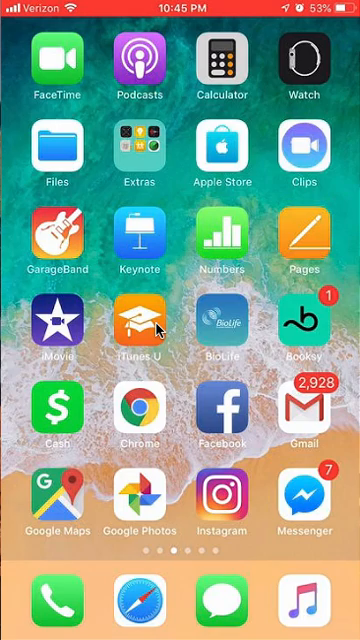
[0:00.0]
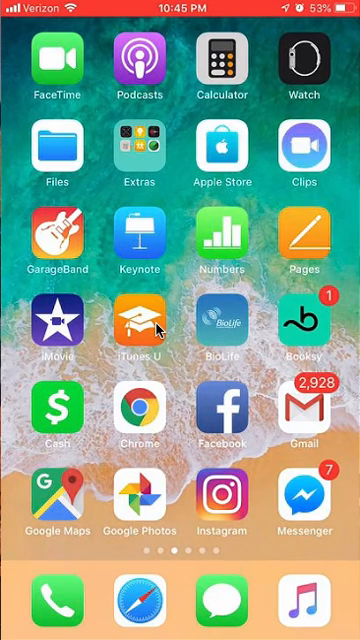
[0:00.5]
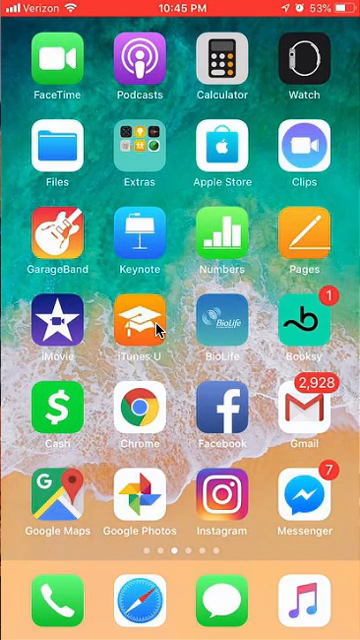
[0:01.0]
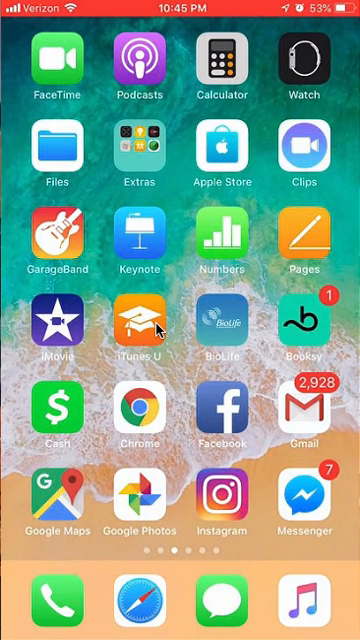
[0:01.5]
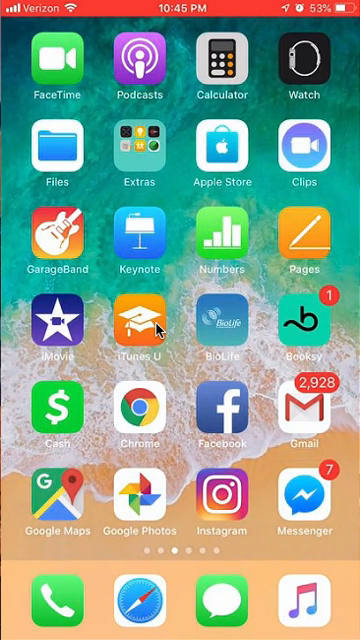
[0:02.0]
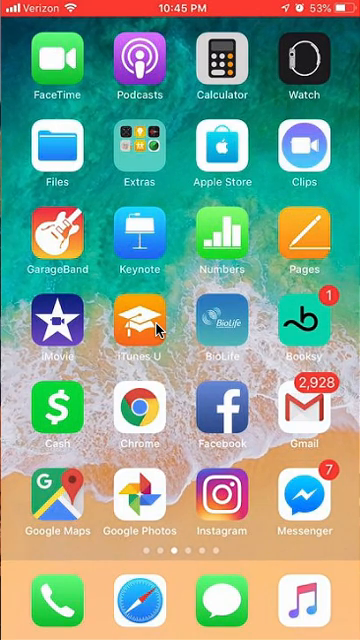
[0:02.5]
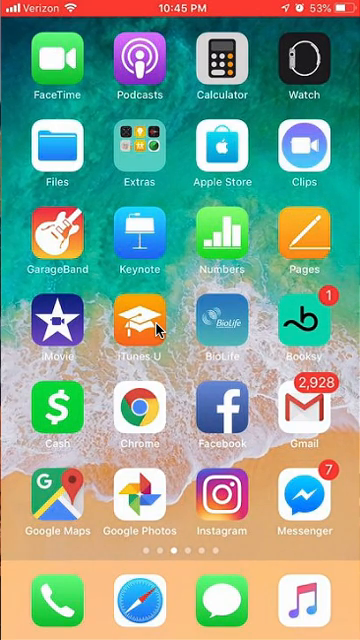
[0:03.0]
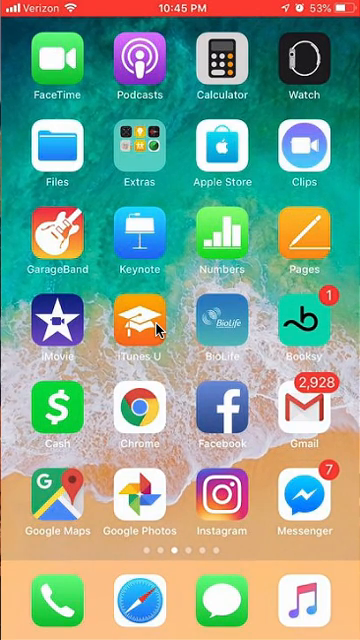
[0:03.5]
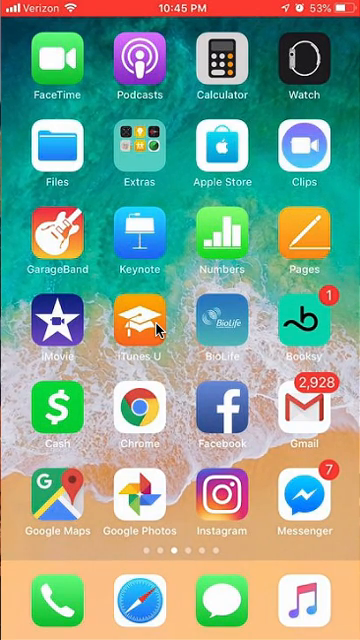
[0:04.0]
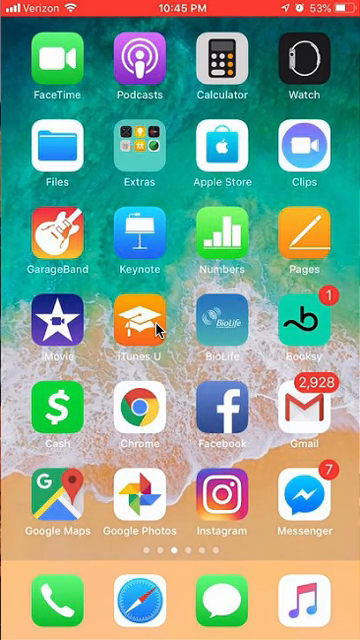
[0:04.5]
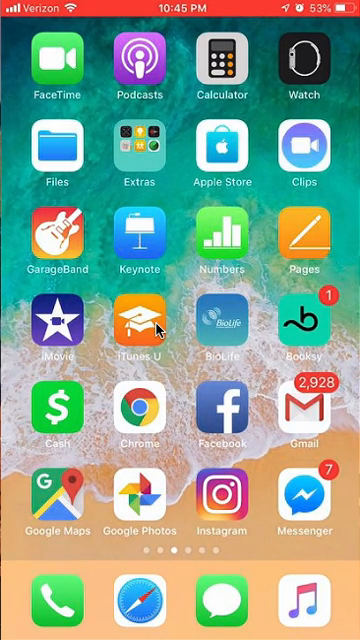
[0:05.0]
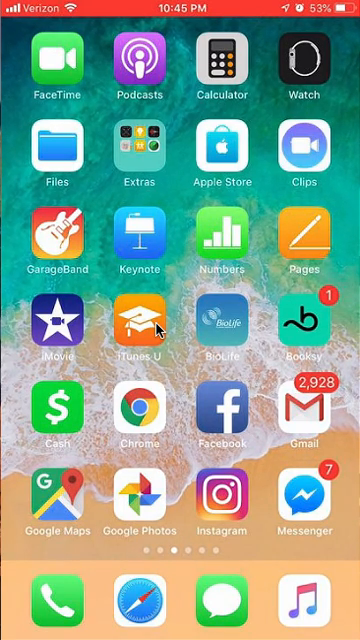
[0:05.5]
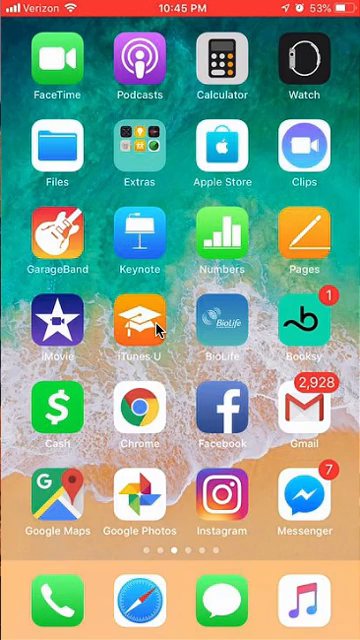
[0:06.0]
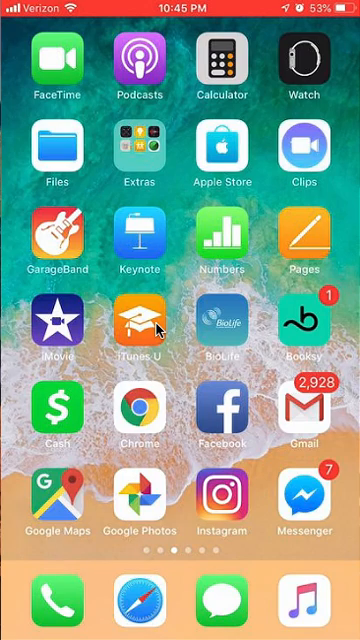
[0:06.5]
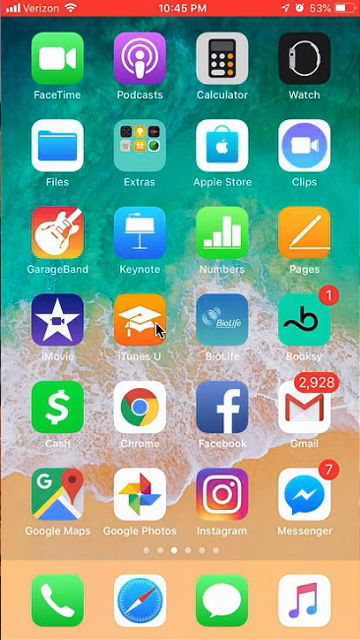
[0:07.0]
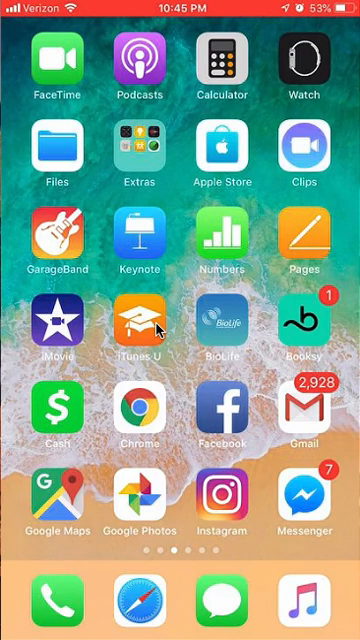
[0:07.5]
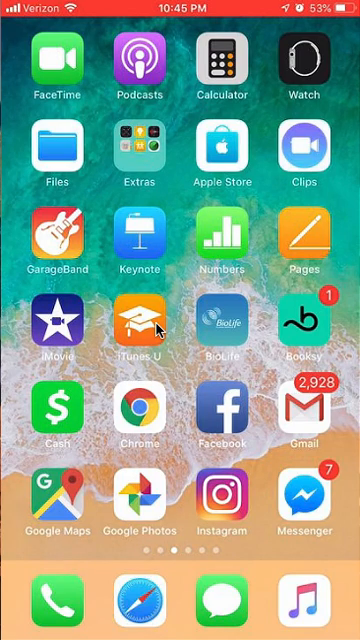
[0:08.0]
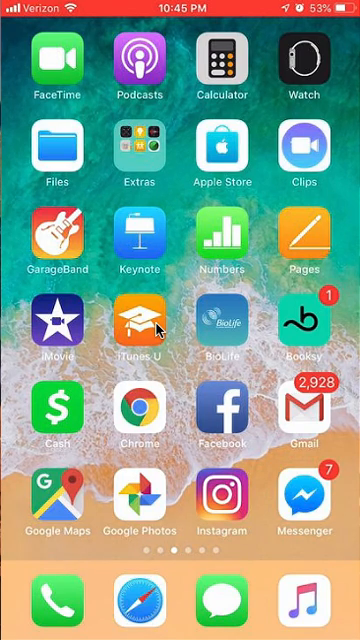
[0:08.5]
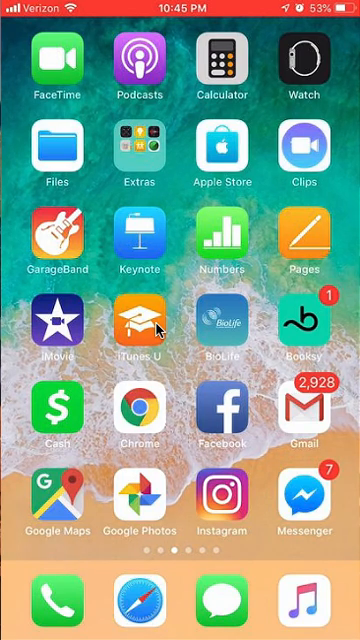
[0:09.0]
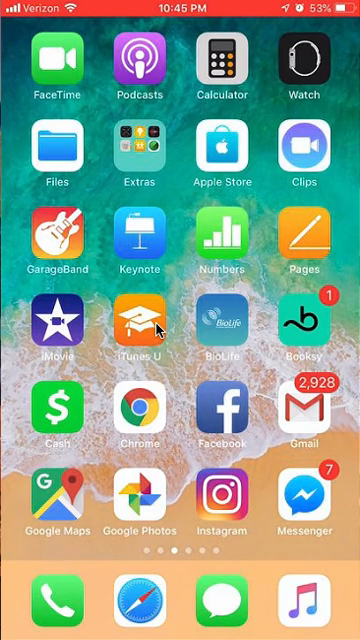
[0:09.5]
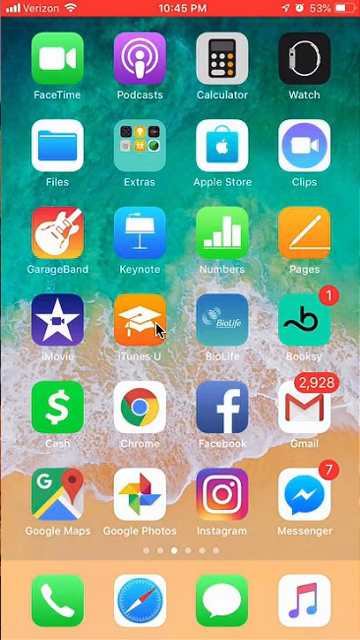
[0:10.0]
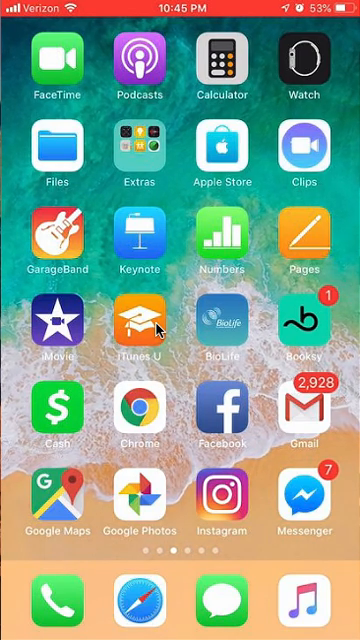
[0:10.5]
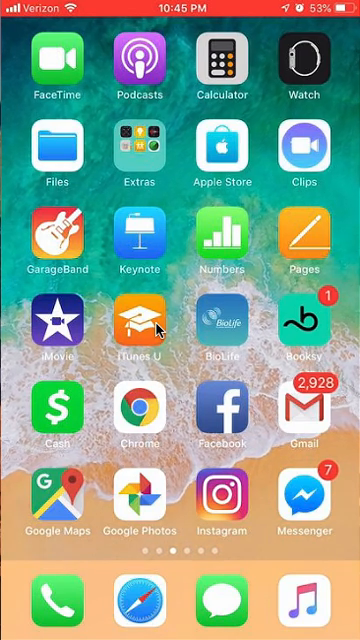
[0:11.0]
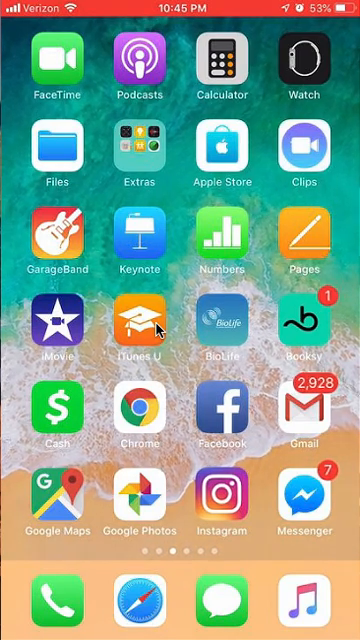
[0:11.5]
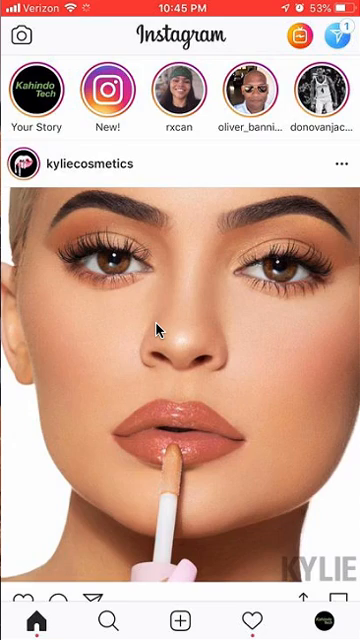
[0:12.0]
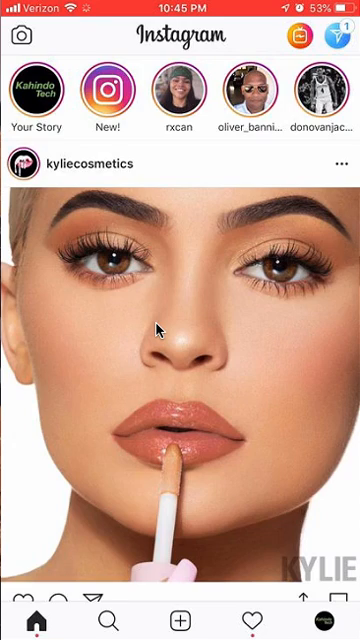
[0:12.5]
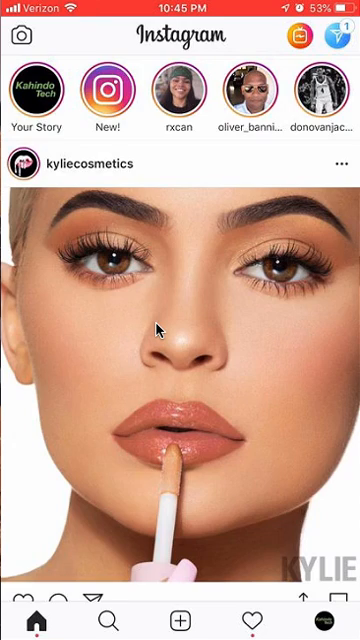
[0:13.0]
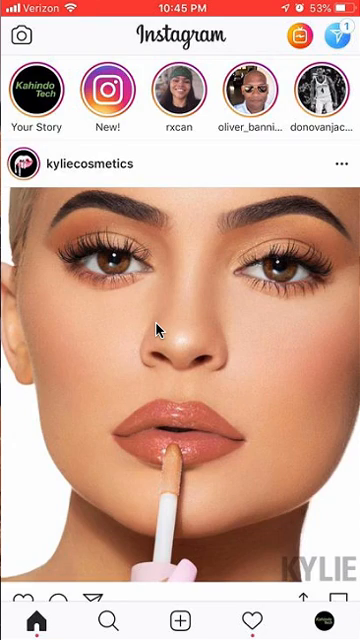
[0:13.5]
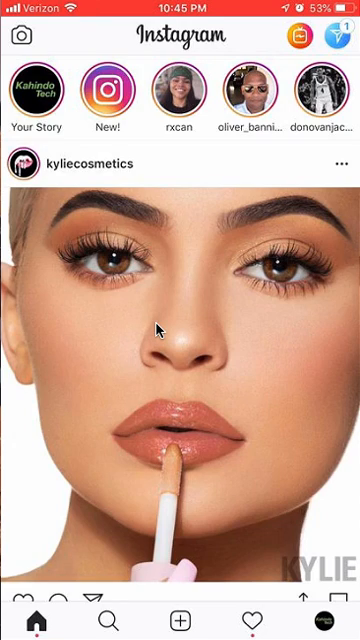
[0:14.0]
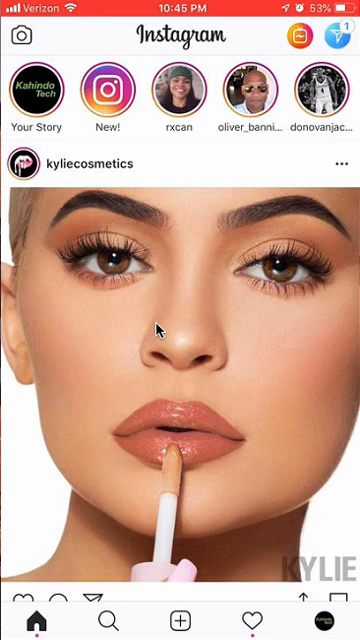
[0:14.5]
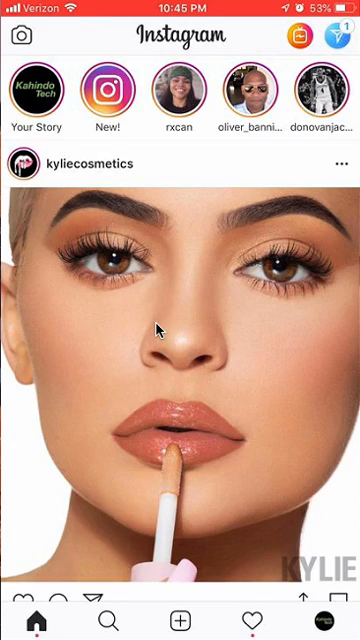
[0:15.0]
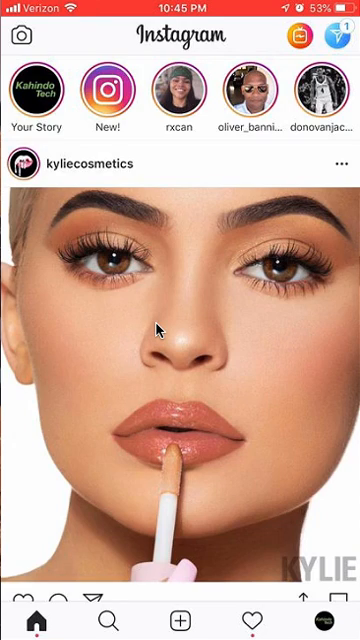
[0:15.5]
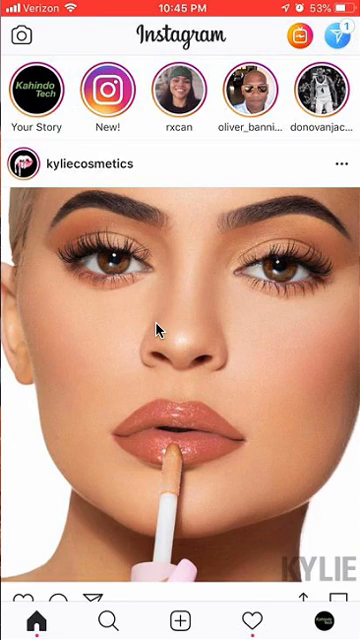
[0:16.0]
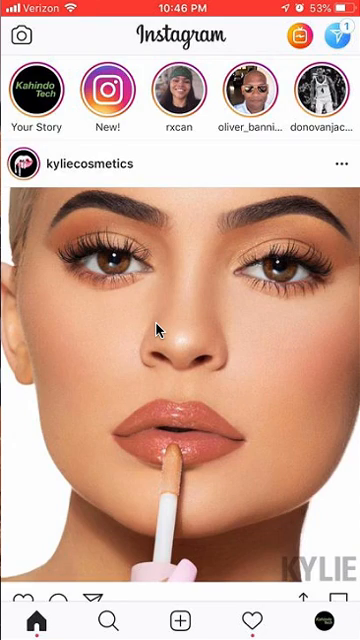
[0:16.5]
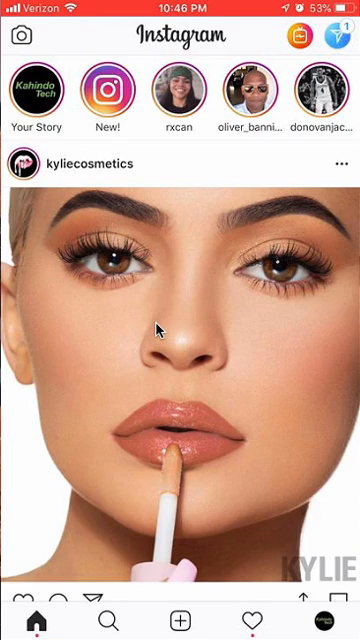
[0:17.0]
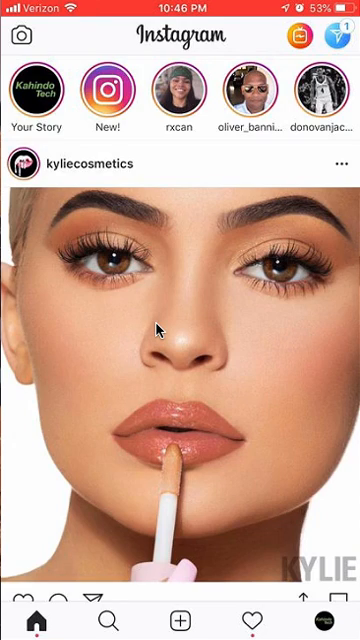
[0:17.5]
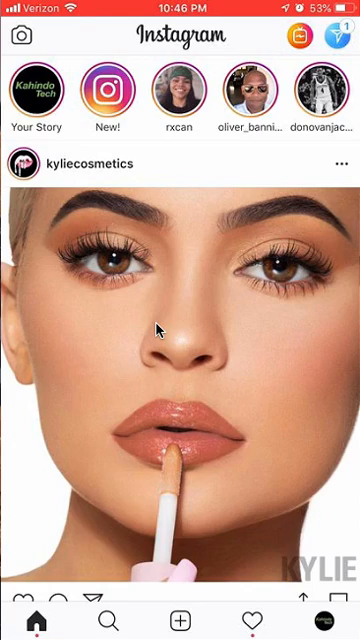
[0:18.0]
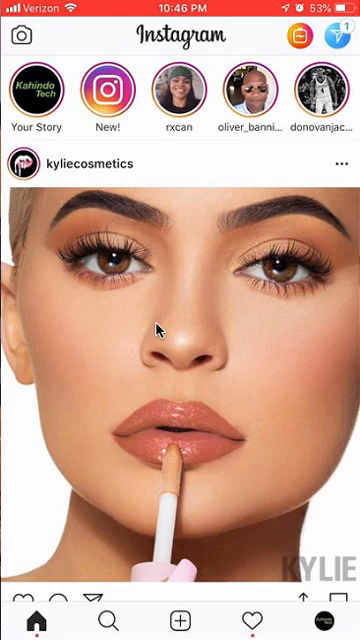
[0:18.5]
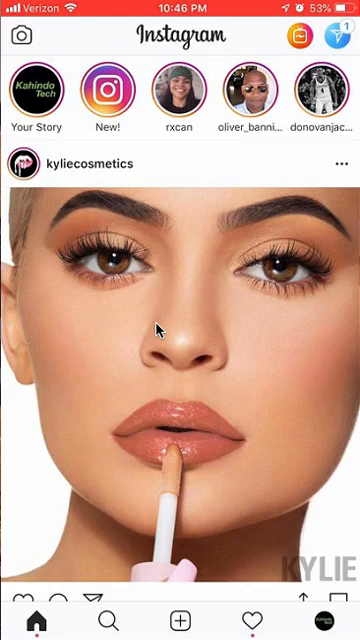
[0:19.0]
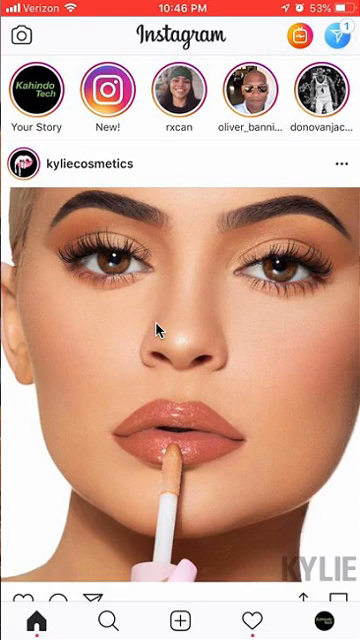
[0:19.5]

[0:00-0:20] The home screen of a mobile device that looks like a cell phone is displayed, with various app icons such as FaceTime, Fashion App, Facebook, Instagram, Chrome and other applications. The icons are arranged in four columns, with seven icons in each column from top to bottom. The Instagram icon is selected, and the Instagram page for Kylie Cosmetics pops up on the screen. It shows an image of Kylie Jenner's face: she has brown eyes, dark eyebrows, and glossy lipstick in a coppery brown shade, with the lip gloss stick pressed against her lower lip. Her lashes look thick, and she stares straight ahead. In the lower right corner of the screen, gray text reads "Kylie". Above her image are five other Instagram channels. This view stays on the screen.